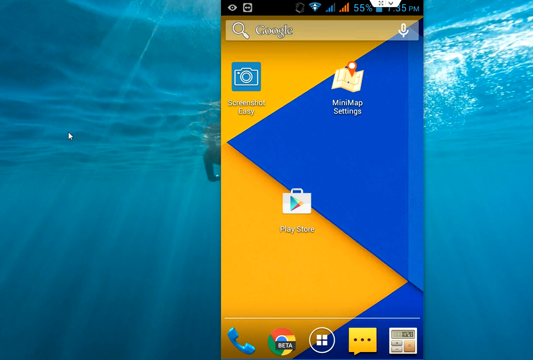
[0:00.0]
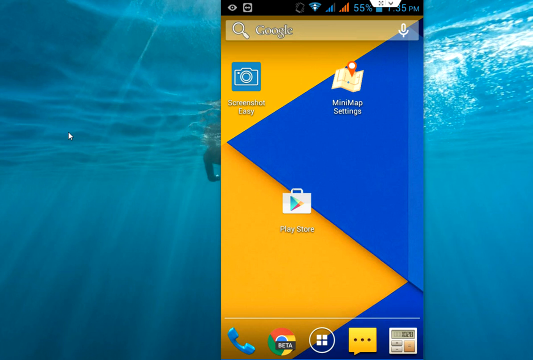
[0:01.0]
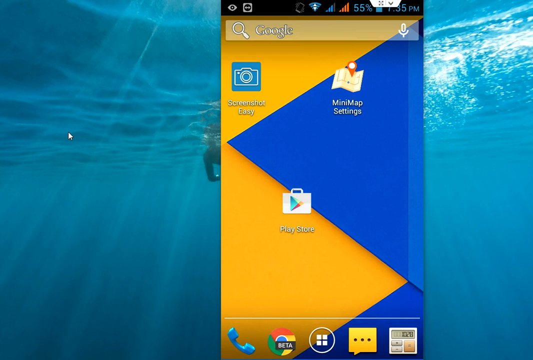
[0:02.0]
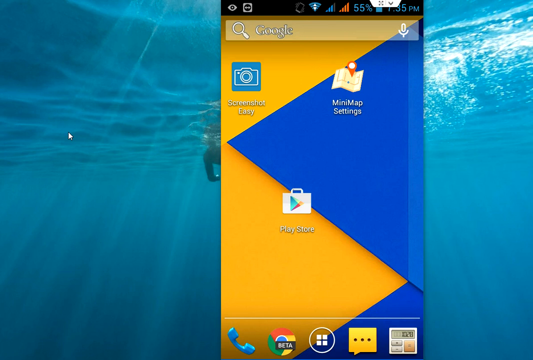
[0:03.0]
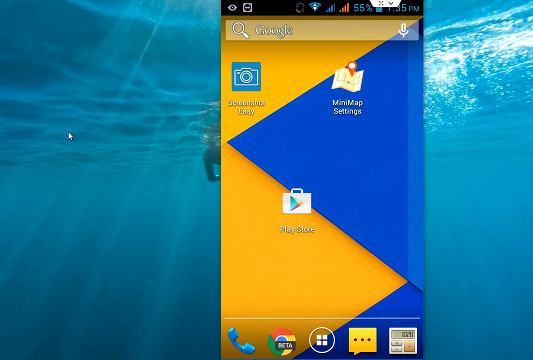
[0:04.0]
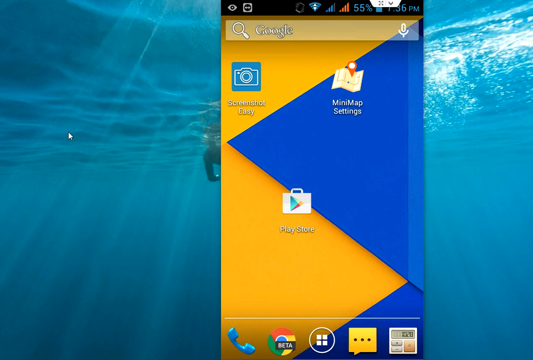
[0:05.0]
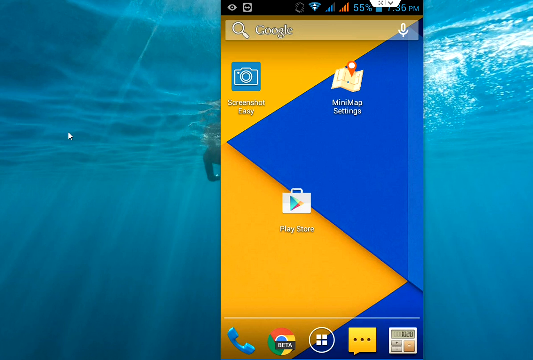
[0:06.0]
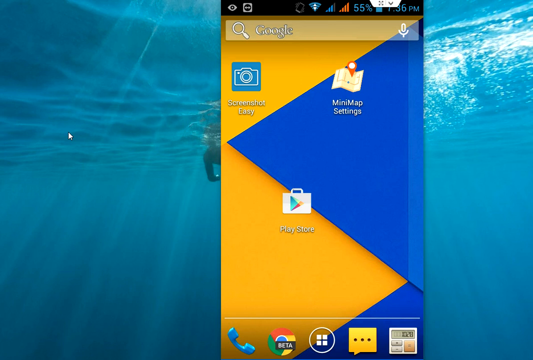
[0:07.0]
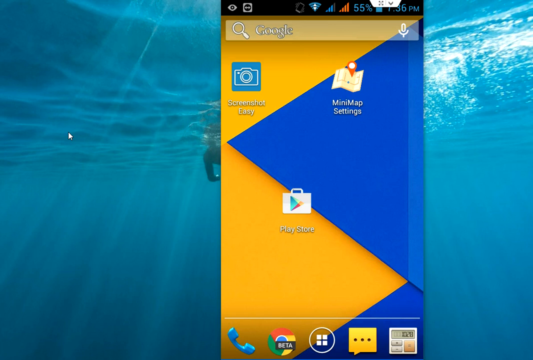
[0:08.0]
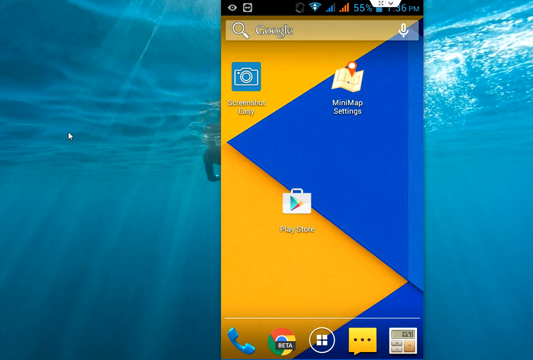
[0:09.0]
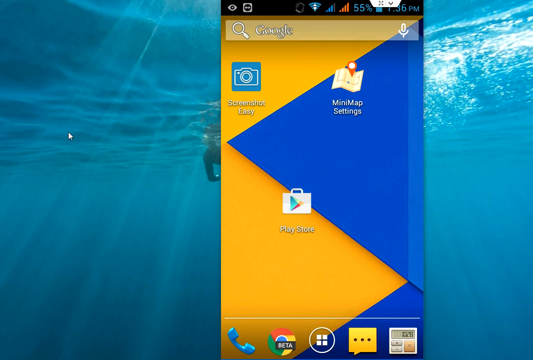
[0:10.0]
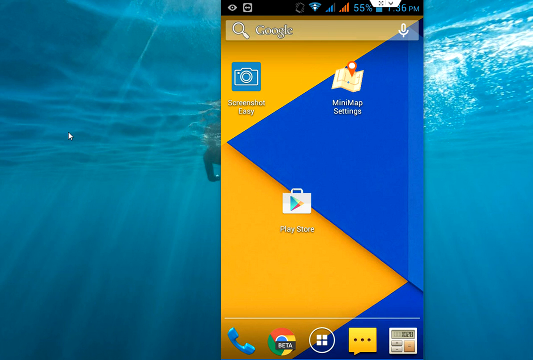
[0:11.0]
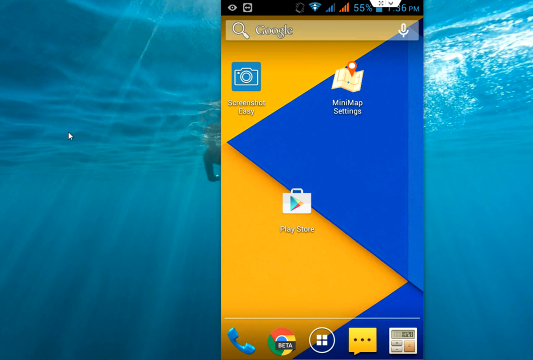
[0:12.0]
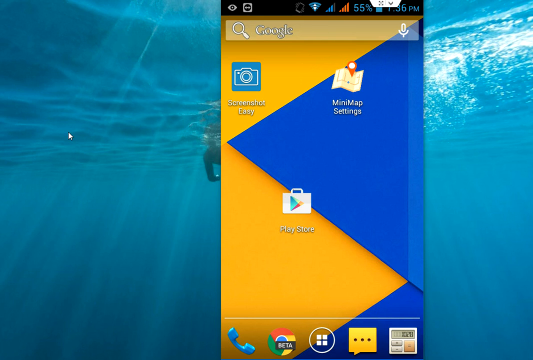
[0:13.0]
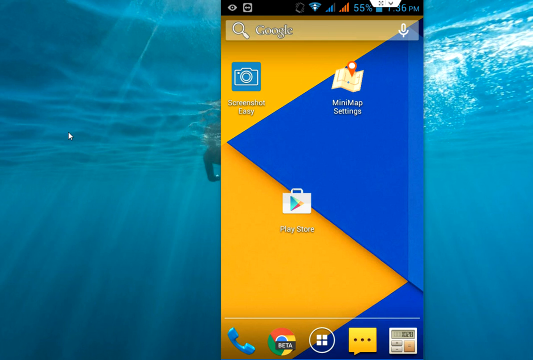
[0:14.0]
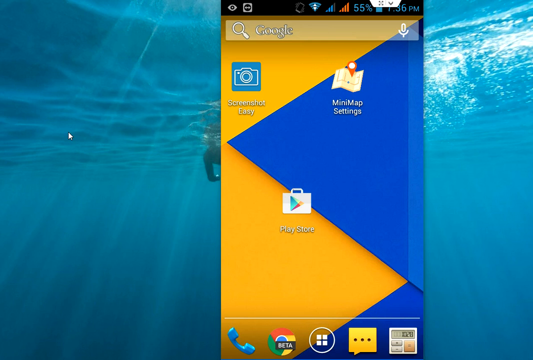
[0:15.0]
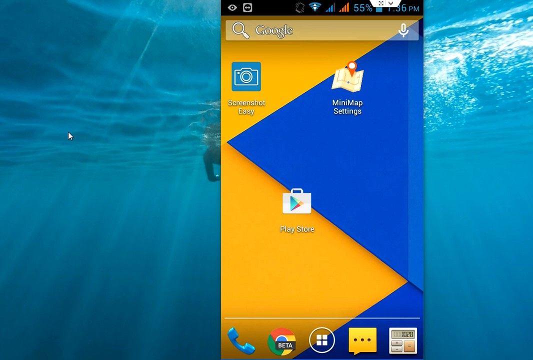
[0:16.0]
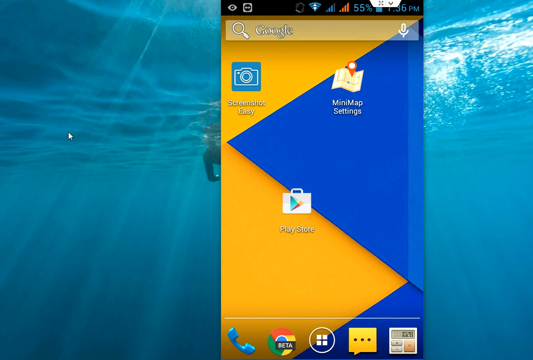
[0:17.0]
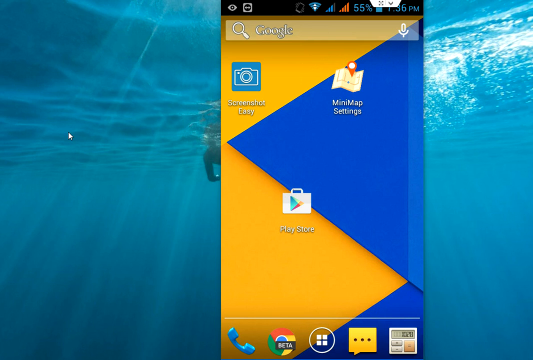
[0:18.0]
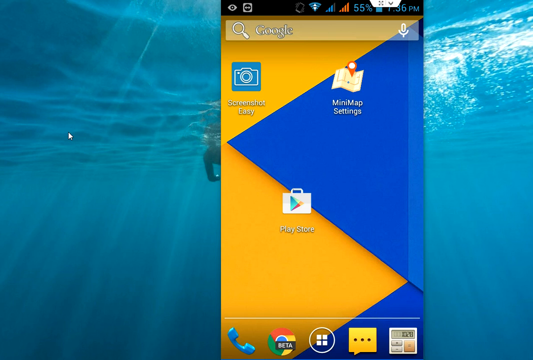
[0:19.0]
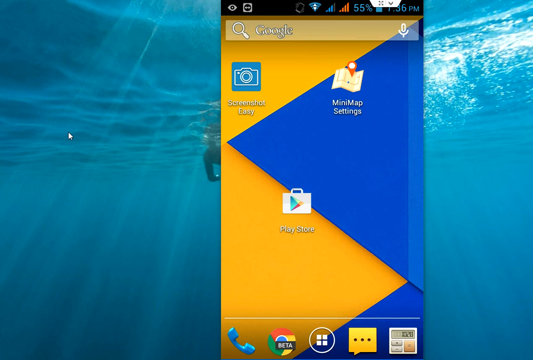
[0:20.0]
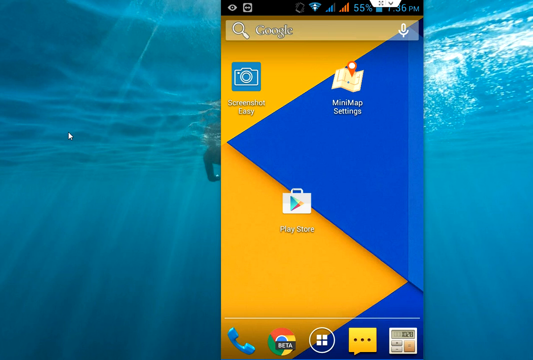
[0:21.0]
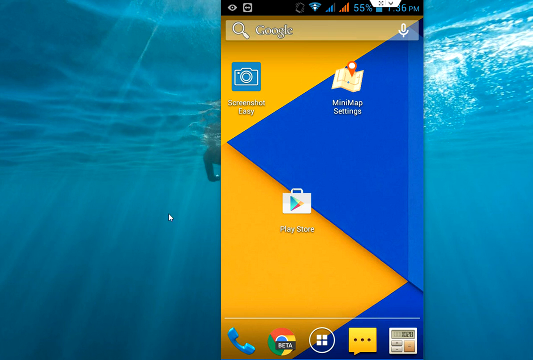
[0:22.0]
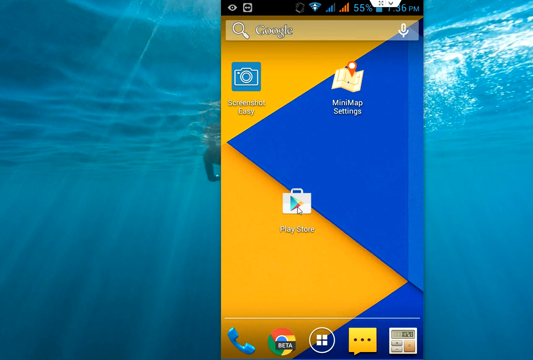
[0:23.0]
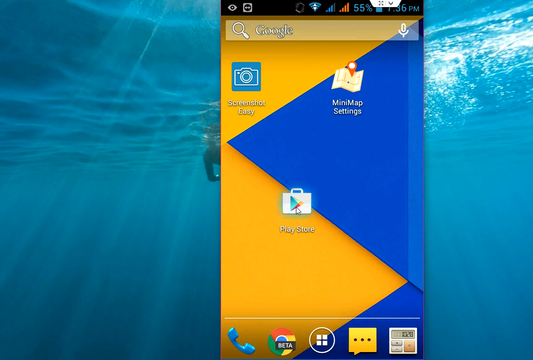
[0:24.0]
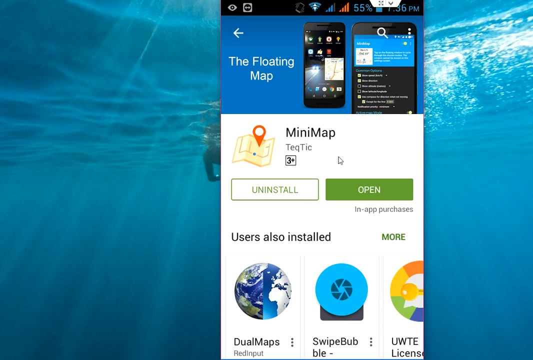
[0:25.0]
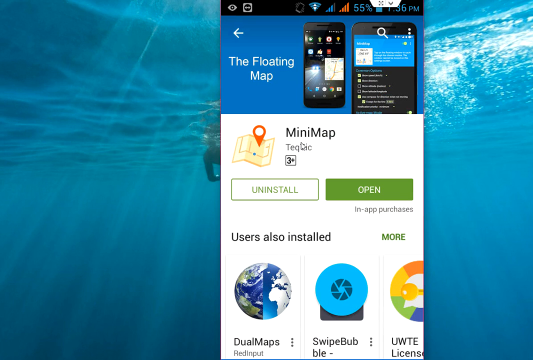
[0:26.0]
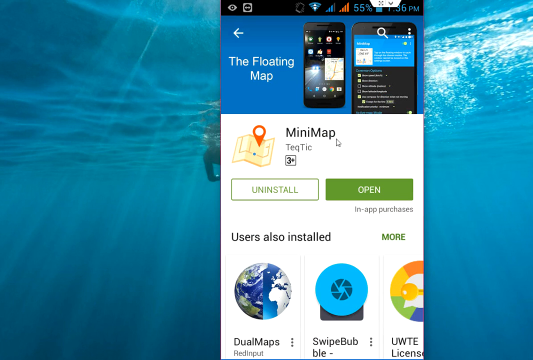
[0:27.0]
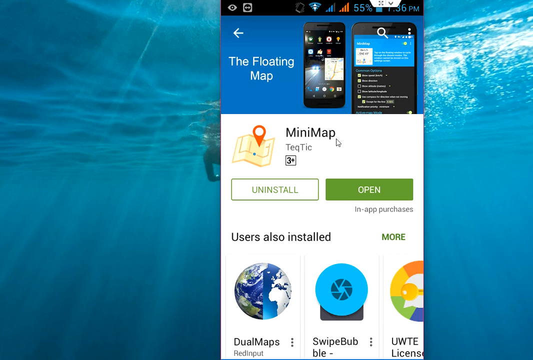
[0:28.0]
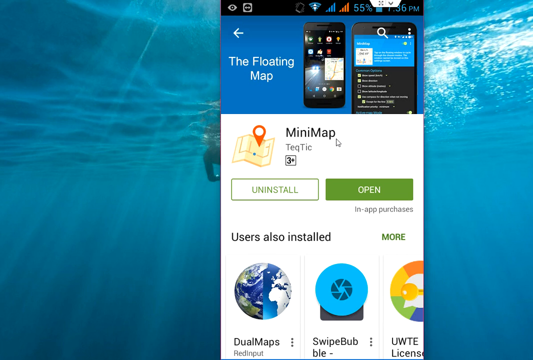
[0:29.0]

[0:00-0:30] The background is filled with what appears to be a swimming pool, with sun or light rays shining through and into the water. The view is under the water, and in the background there appears to be a swimmer whose right arm is visible; they wear neoprene and possibly a scuba mask. Centered or slightly right of center is a screenshot of what appears to be a cell phone, with a Google search bar at the top of the phone screen. There is a triangle graphic with half a gold triangle and a full gold triangle, met on the other side by a dark blue triangle, filled in almost like a sawtooth. There are three slightly illegible logos: one says "mini-map settings", another is a camera, and the third is a suitcase that says "Play Store". The screen changes to show an app store install section for mini-map. At the top of the screen it says "floating map". Then it says "mini-map" and "uninstall", which is a white button with a green frame. Next to that is a green button with white text that says "open", and below it says "users also installed". There is a globe logo, then a fan logo, then a wheel of fortune with colors including green, yellow, orange and blue, and a key.